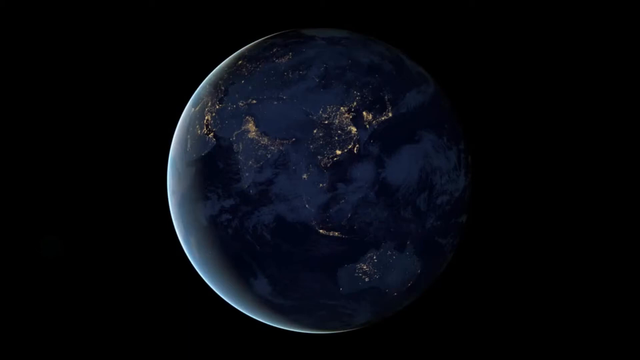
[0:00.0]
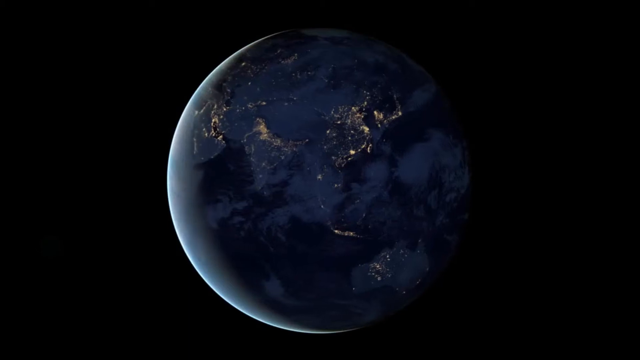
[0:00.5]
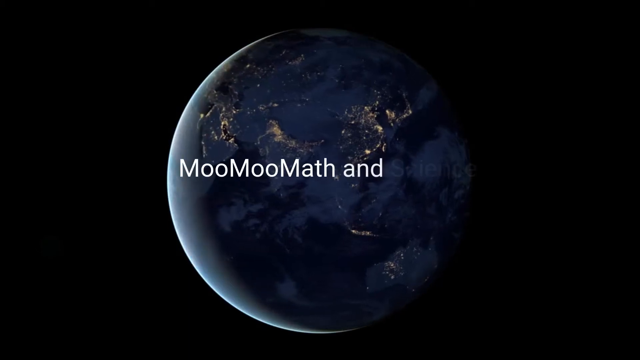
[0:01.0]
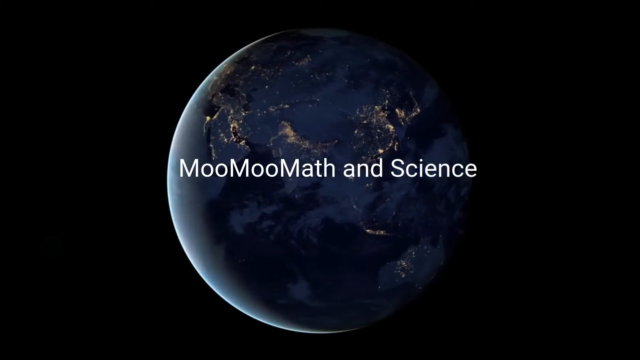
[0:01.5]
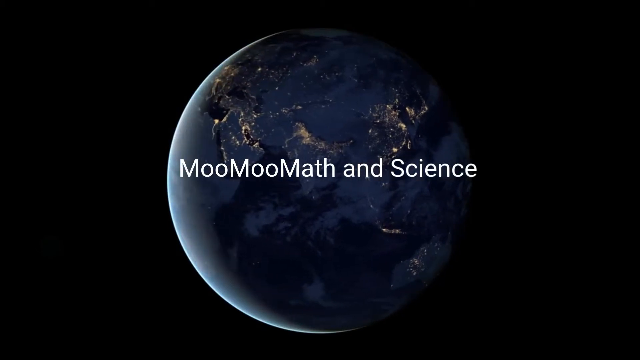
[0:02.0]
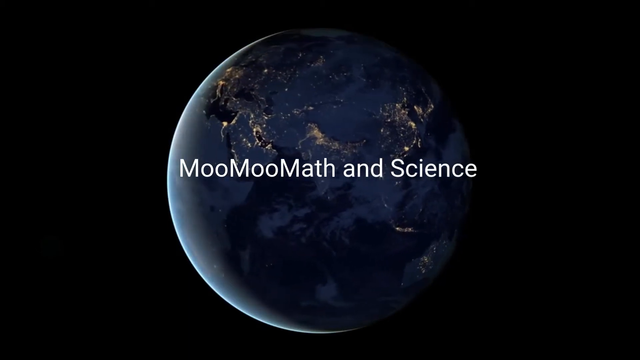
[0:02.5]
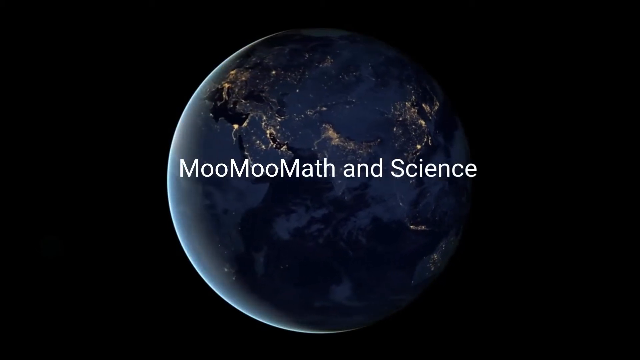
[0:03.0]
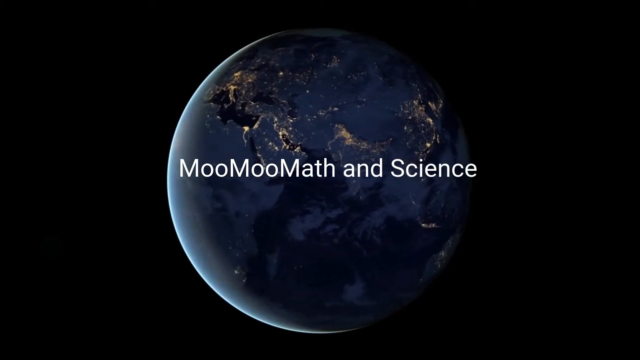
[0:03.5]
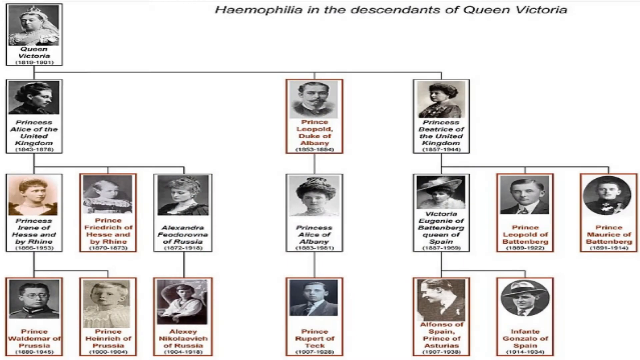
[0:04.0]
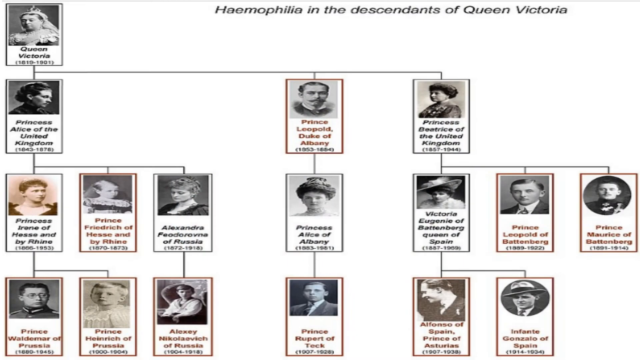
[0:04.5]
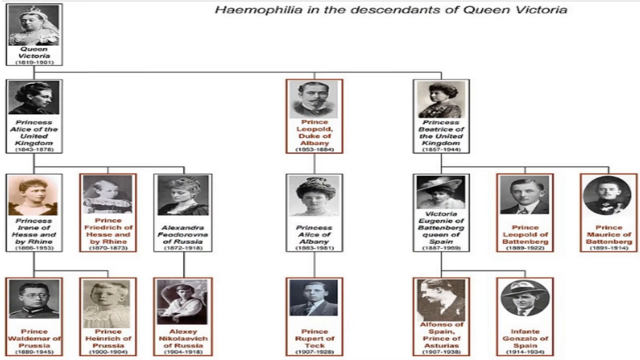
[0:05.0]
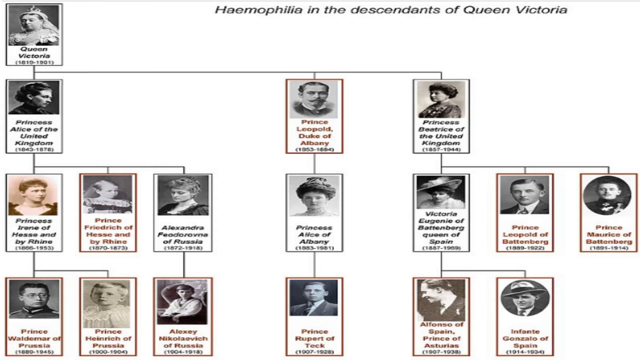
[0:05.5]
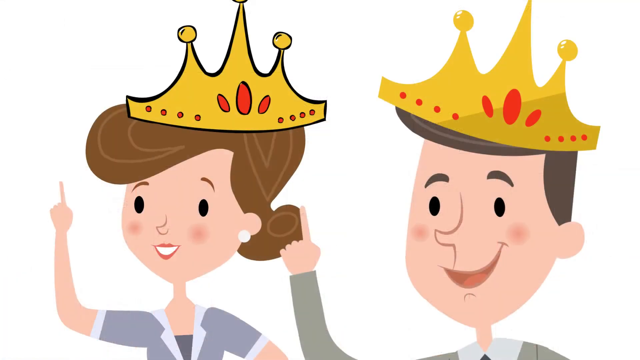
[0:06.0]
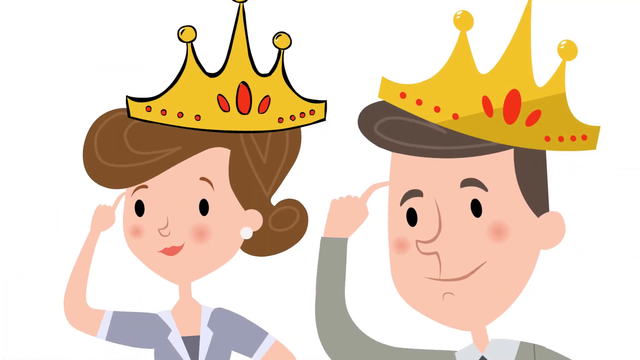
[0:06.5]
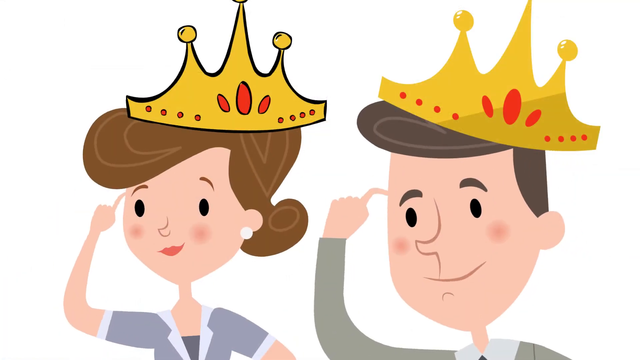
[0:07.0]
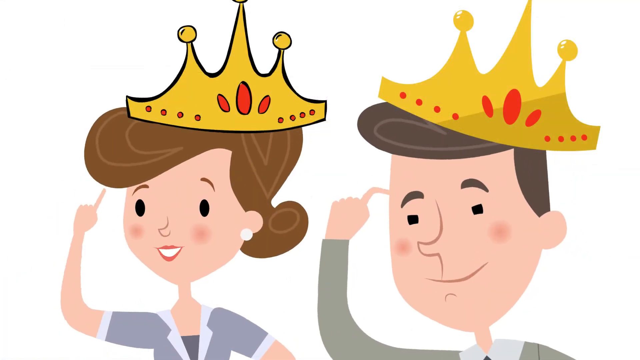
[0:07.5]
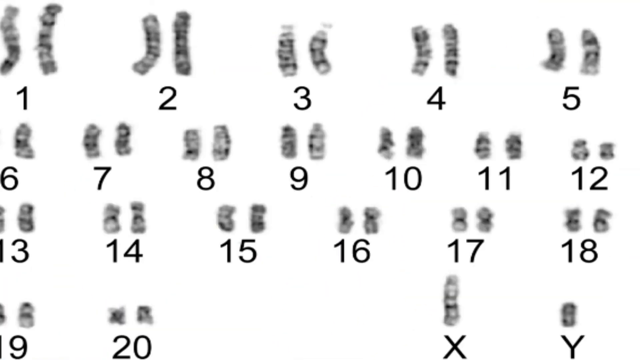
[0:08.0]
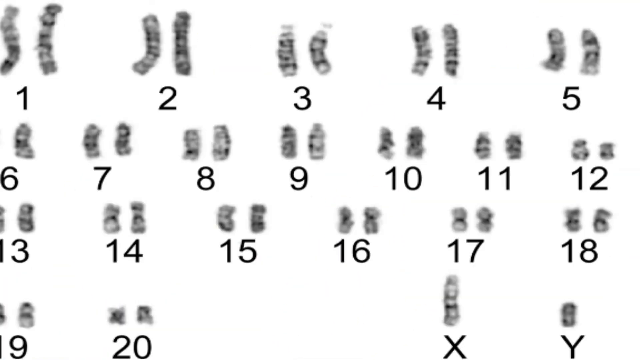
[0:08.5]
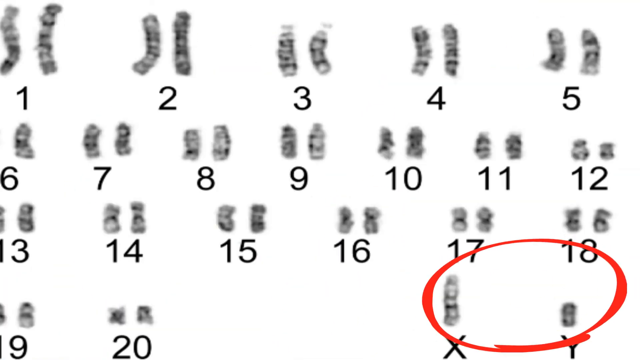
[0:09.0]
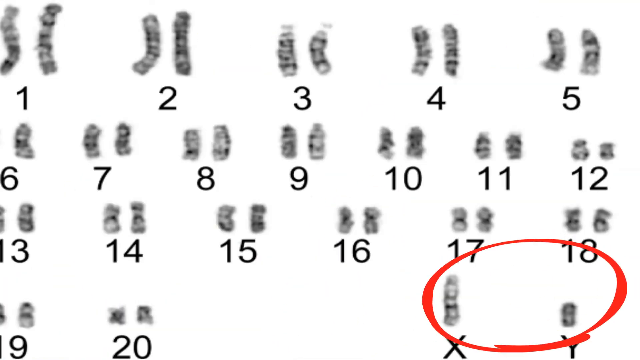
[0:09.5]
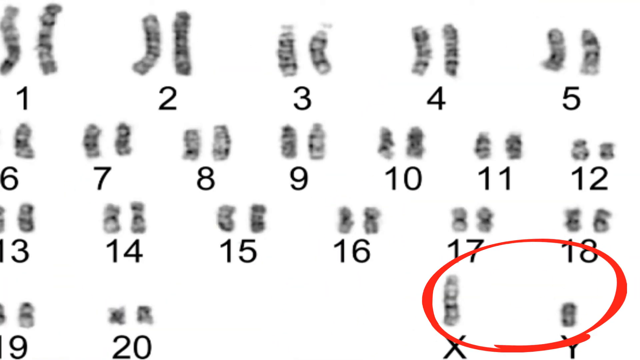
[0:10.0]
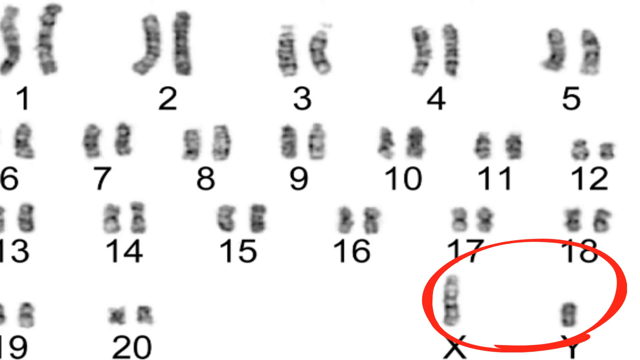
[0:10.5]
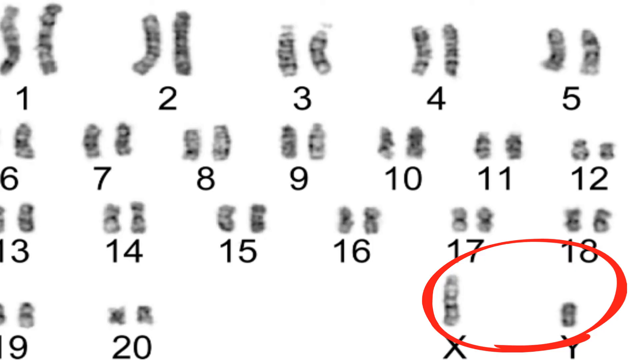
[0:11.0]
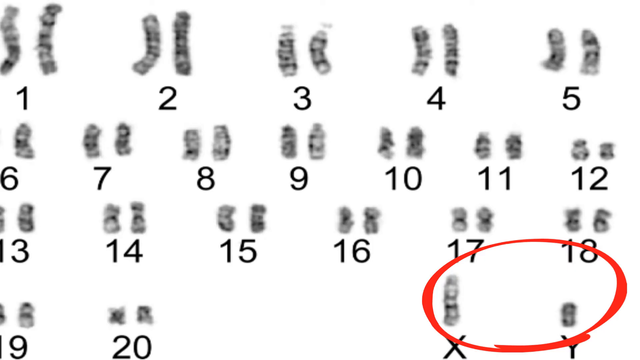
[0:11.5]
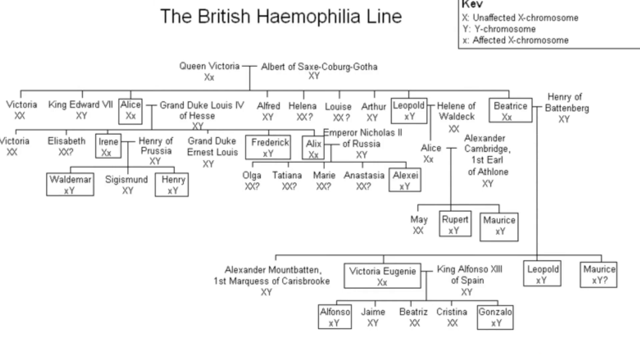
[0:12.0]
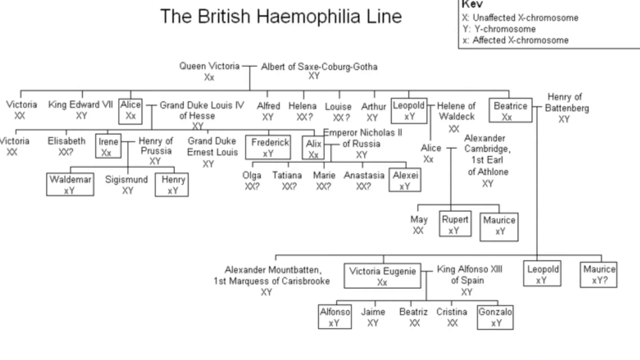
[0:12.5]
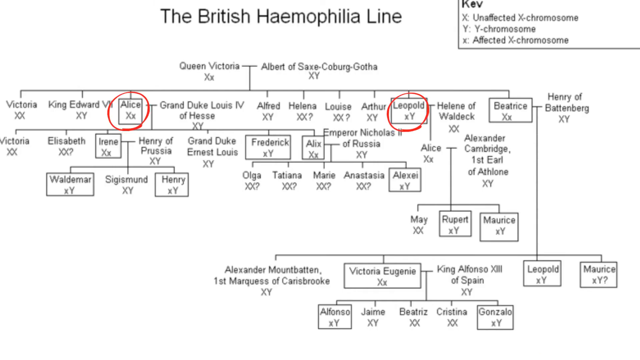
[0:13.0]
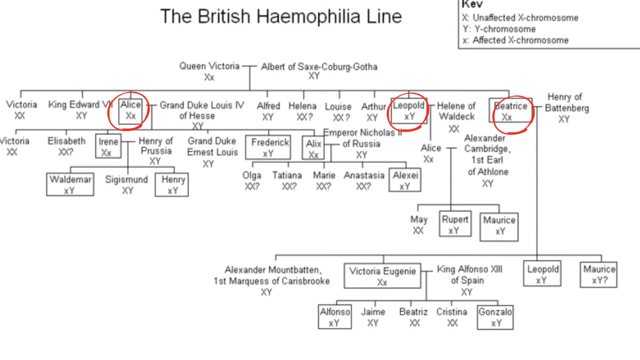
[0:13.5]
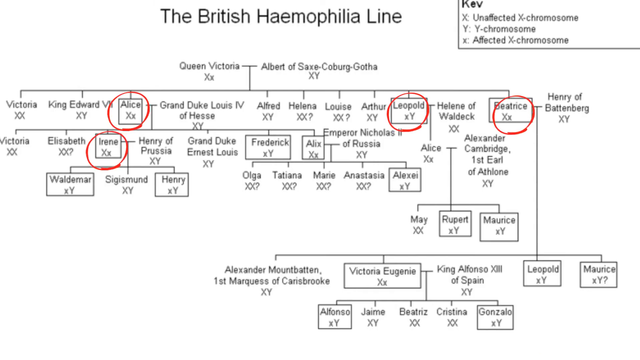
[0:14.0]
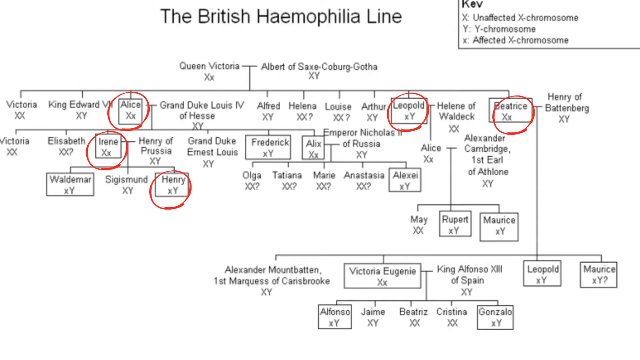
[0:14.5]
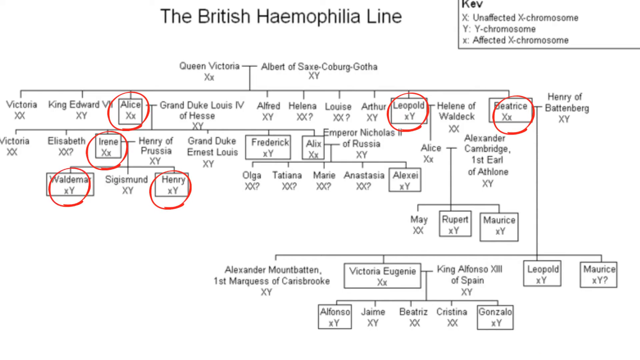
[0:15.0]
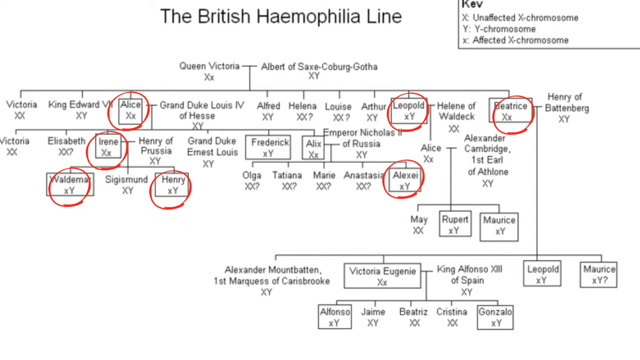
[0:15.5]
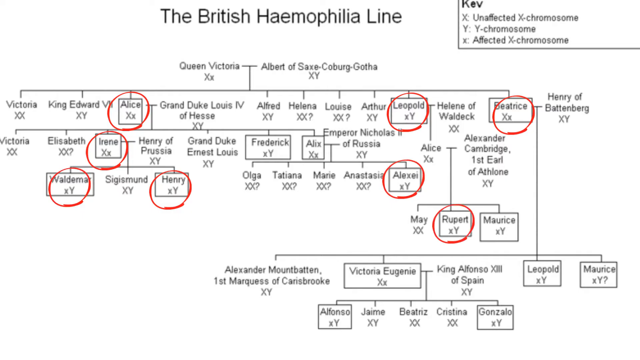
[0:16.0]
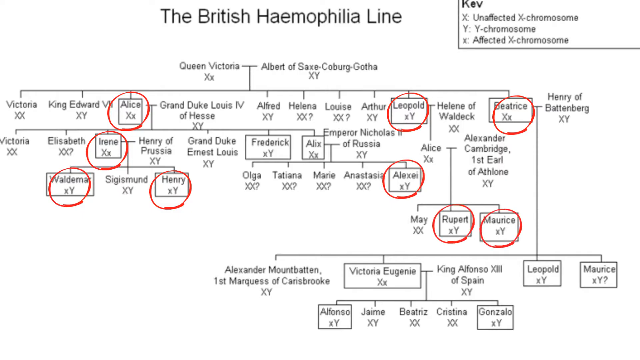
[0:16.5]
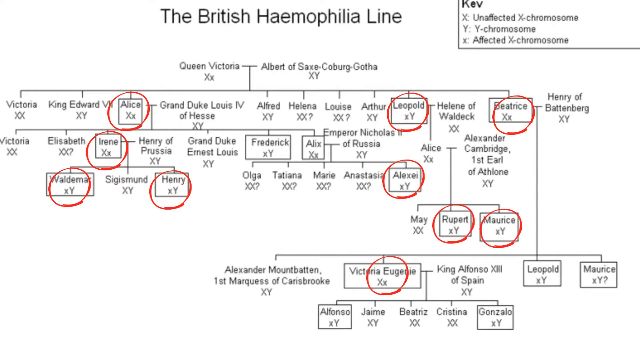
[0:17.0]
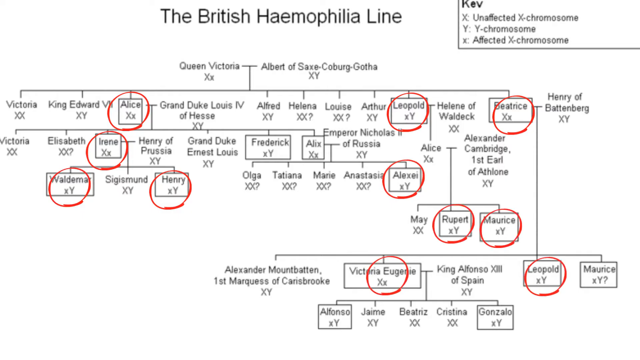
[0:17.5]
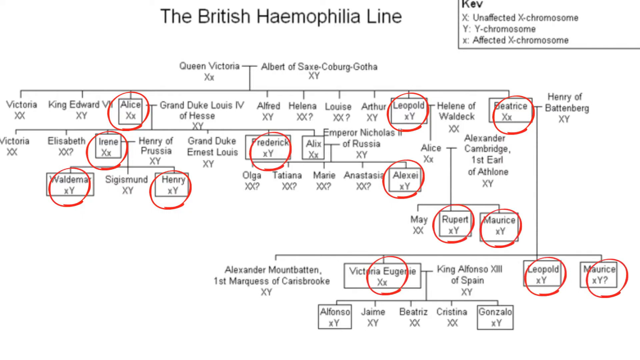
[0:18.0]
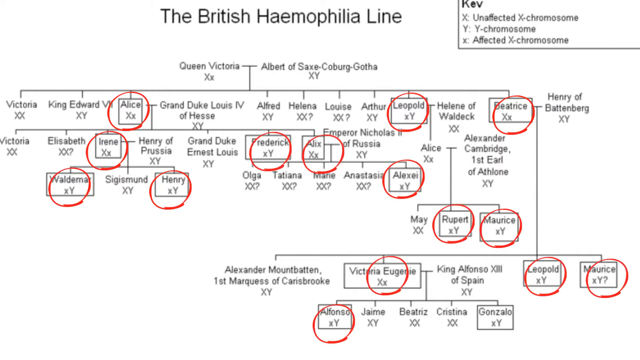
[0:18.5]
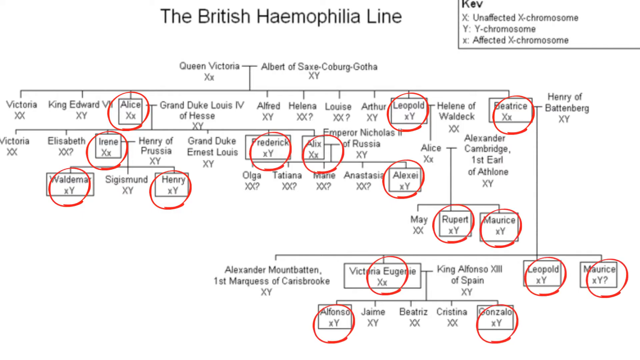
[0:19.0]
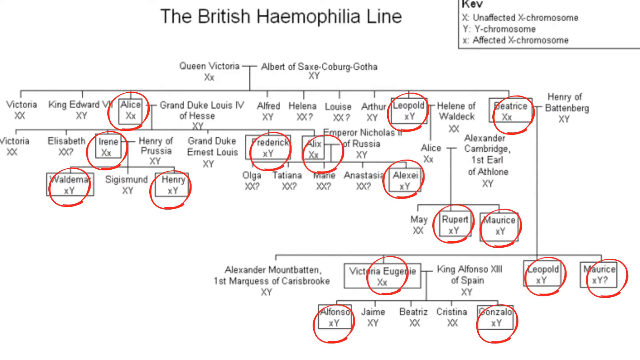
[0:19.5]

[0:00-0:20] A black round object is in the middle of the screen against a black backdrop. A white light runs from the top to the bottom along its left side, and inside the object are multiple blue shapes and some bright white areas. The object turns from left to right. The text "Moo Moo Math and Science" appears. The next screen has numerous people on it, and lines connect one person to another. Starting at the upper left, a line goes down to another female. To the right are a male and a female. Straight down from the very first line is another female, with two boxes to the right of her. From the first female, a line goes down and then to the right, down to another person. The third person on the third line has a line going down to the right. A column appears, with an animated male wearing a crown on the right and what looks like a female with a crown on the left. The video then moves to the British hemophilia line, showing a line.